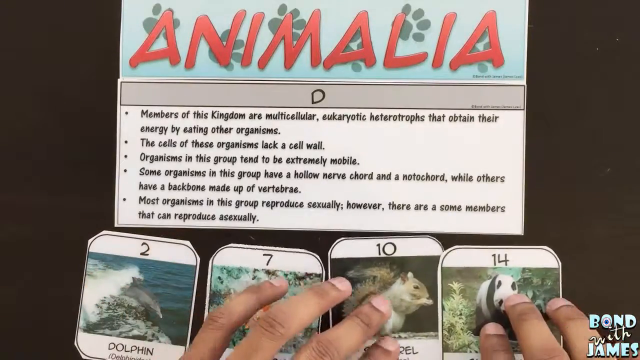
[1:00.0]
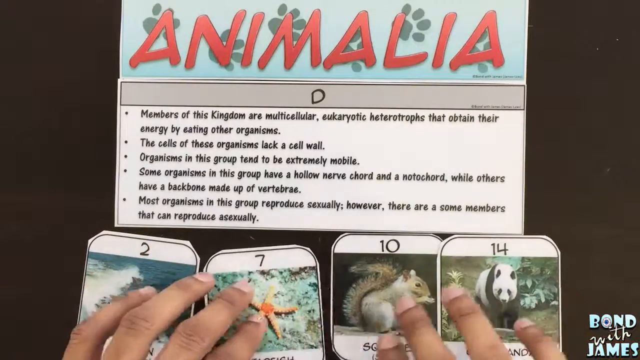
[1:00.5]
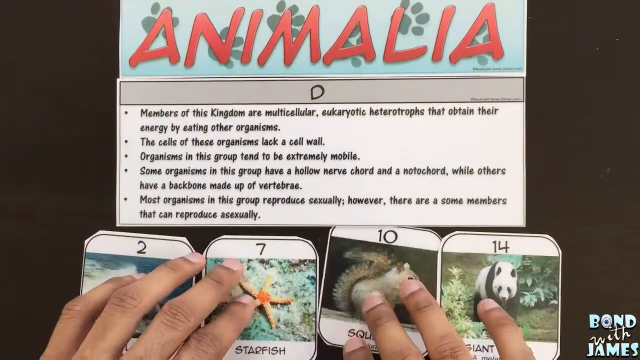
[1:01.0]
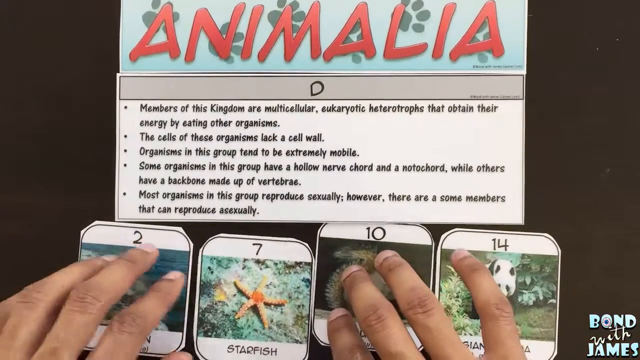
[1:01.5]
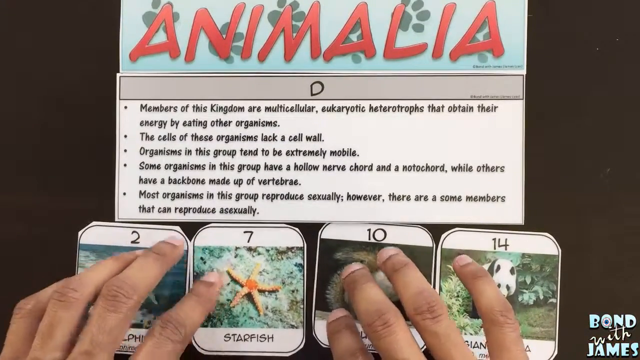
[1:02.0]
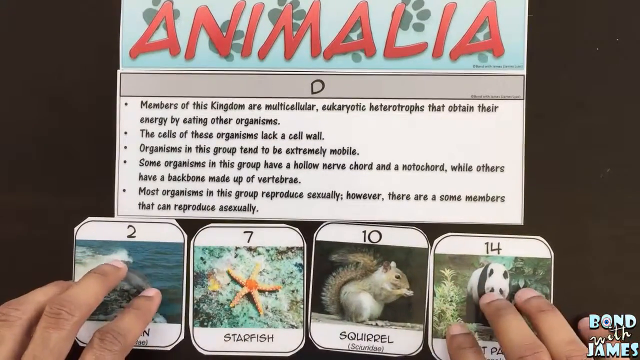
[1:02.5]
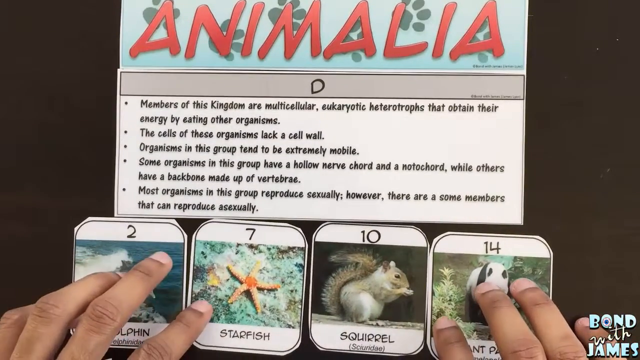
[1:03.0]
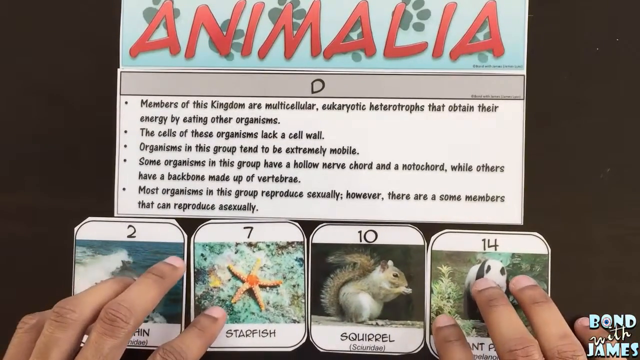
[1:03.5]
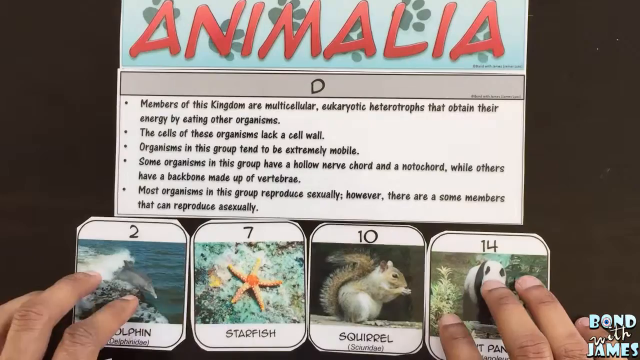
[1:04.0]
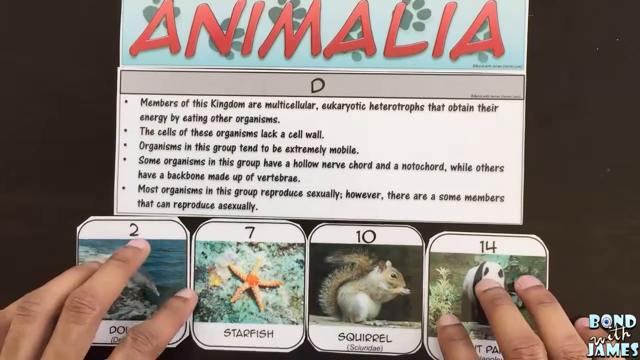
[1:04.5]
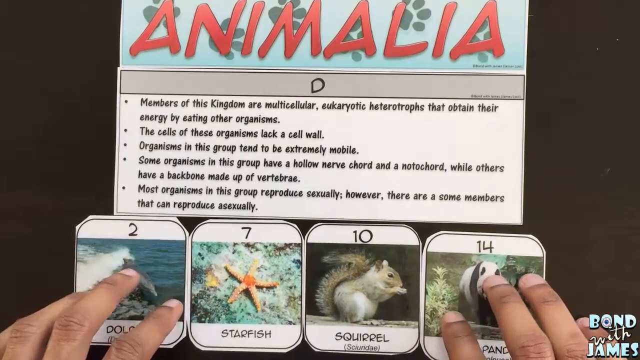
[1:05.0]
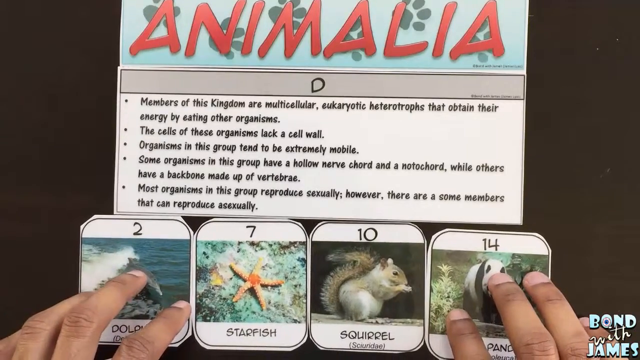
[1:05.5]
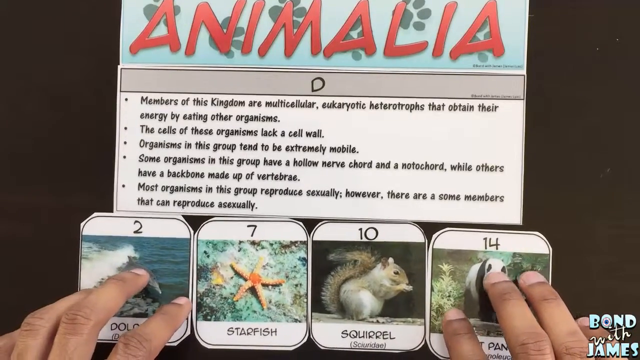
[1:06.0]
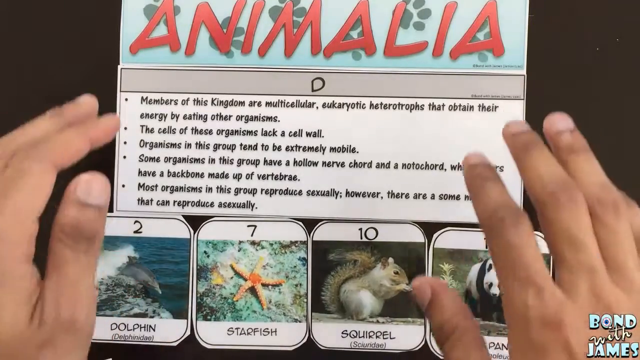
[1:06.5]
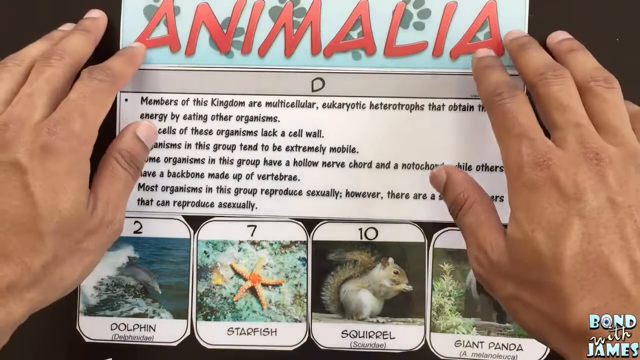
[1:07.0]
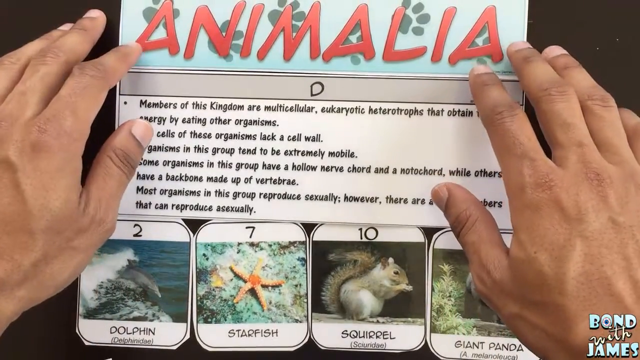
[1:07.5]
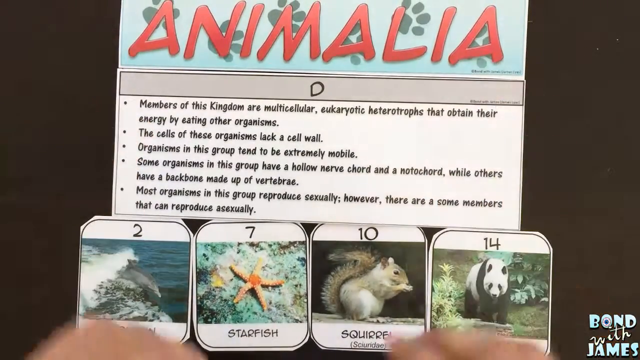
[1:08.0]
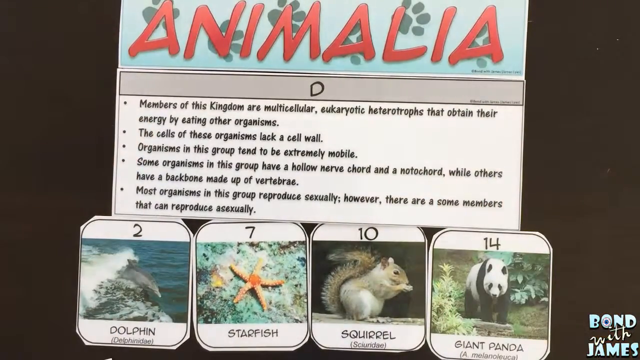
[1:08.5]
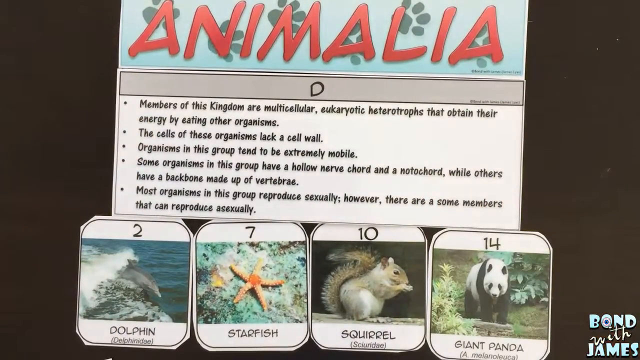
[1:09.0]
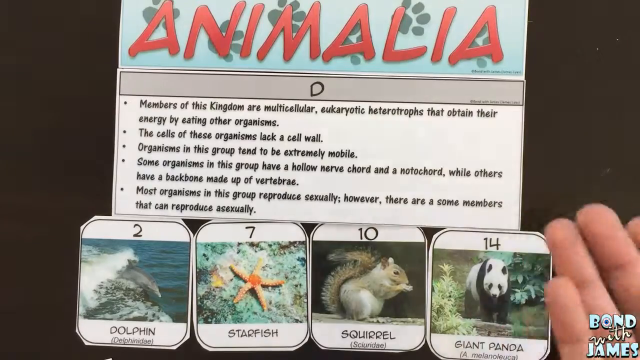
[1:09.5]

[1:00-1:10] The man arranges posters or papers with his left and right hands. The papers are numbered 2, 7, 10 and 14 and show pictures of animals: the first shows a dolphin in water, the second a starfish, the third a squirrel and the last a panda. Above them is "animalia", written in red on a blue background with black cat footprints. Another paper, labeled D, has a white background and reads: "Members of this kingdom are multicellular, eukaryotic", "that obtain their energy by eating other organisms. The cells of these organisms lack a cell wall. Organisms in this group tend to be extremely mobile." and "Most organisms in this group reproduce sexually. However, there are some members that can reproduce asexually."